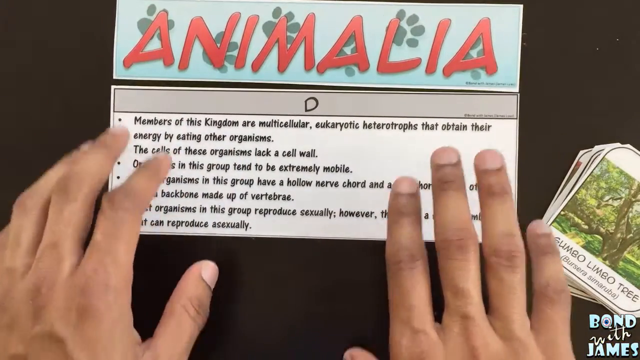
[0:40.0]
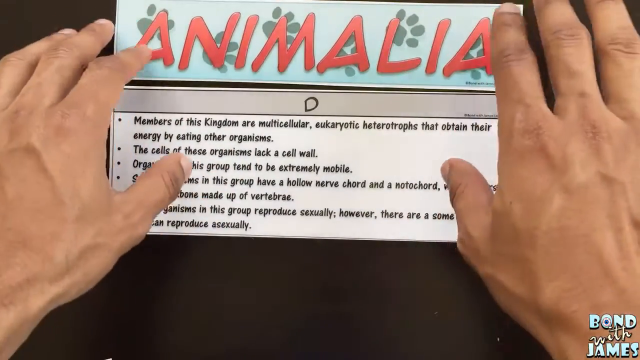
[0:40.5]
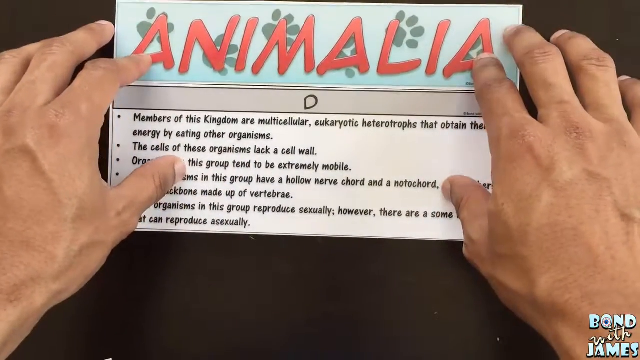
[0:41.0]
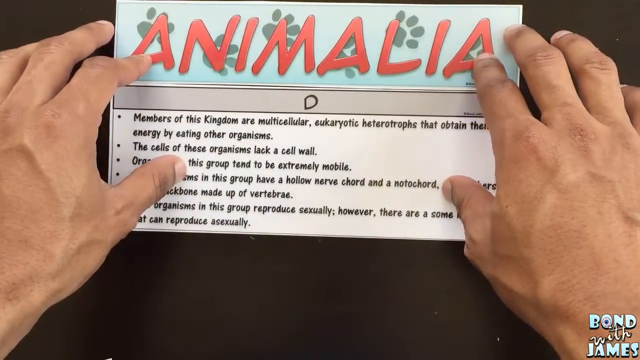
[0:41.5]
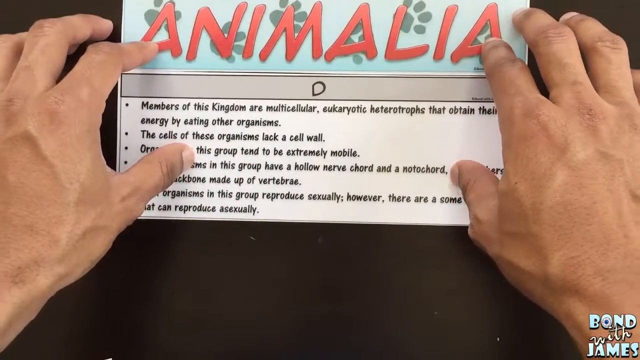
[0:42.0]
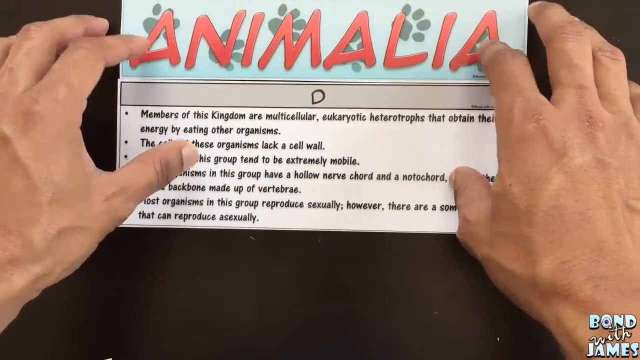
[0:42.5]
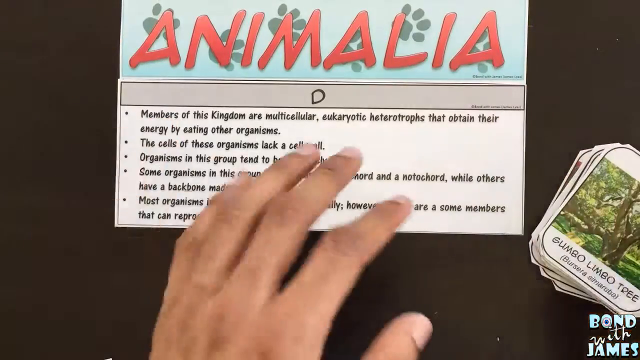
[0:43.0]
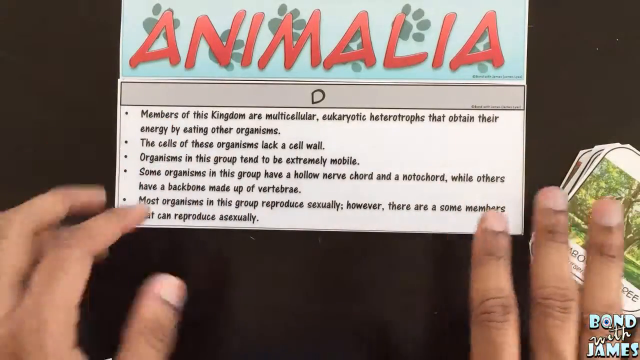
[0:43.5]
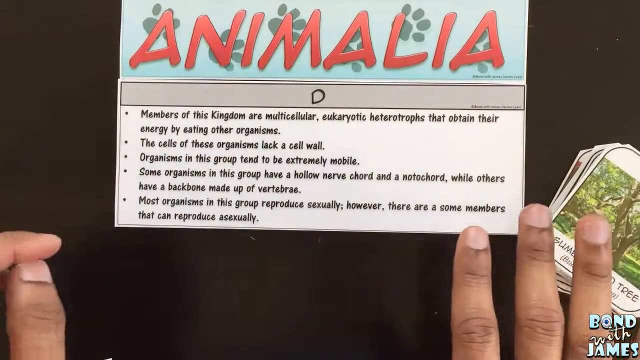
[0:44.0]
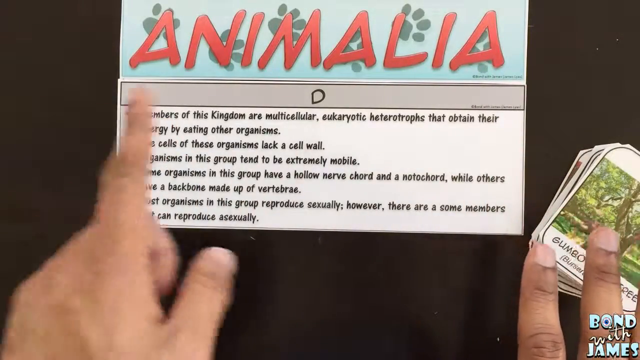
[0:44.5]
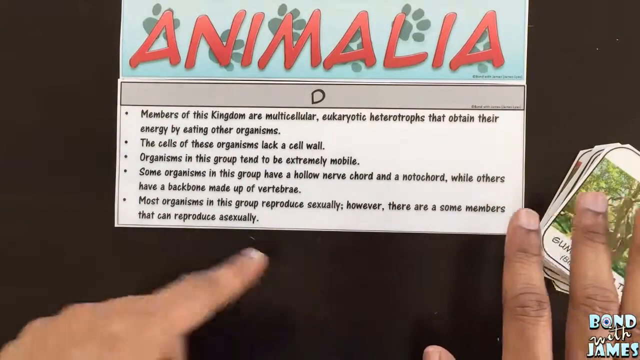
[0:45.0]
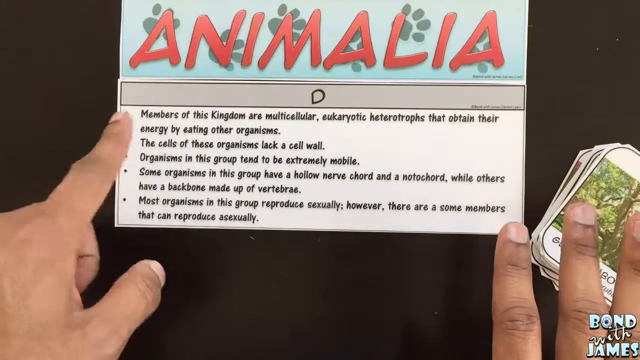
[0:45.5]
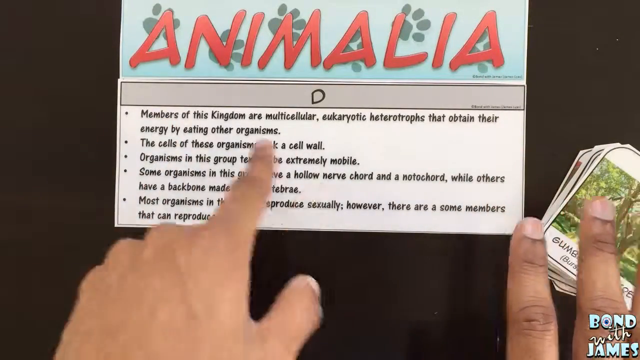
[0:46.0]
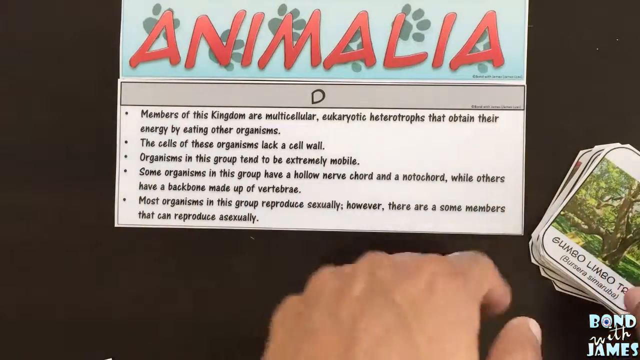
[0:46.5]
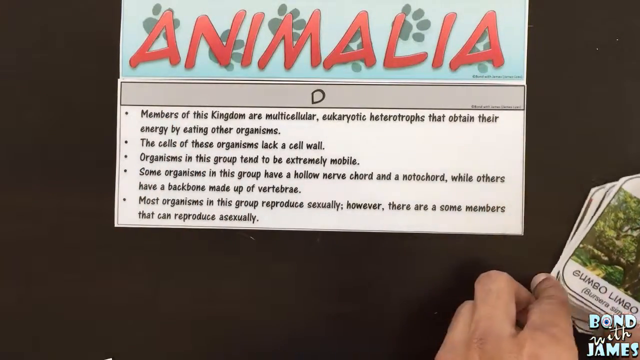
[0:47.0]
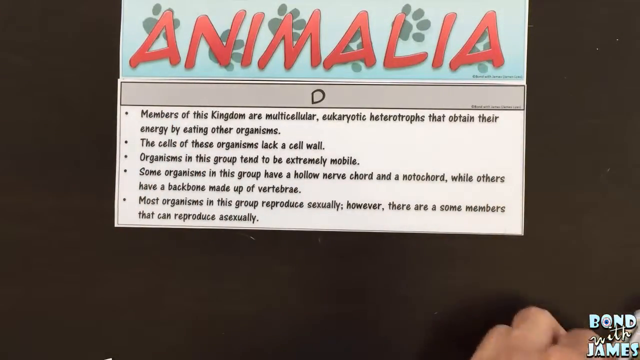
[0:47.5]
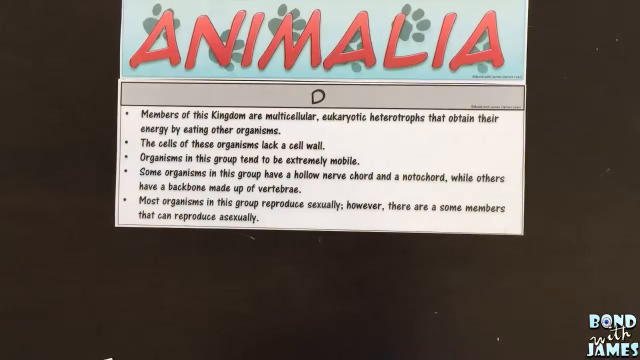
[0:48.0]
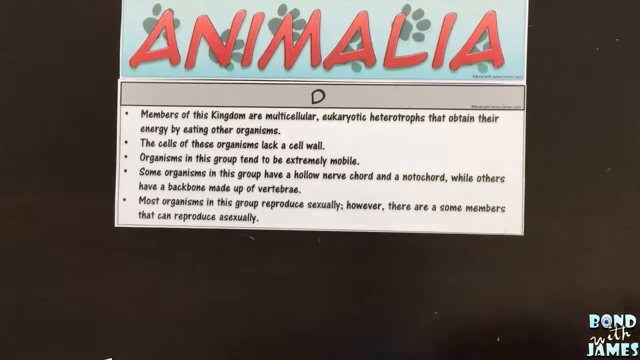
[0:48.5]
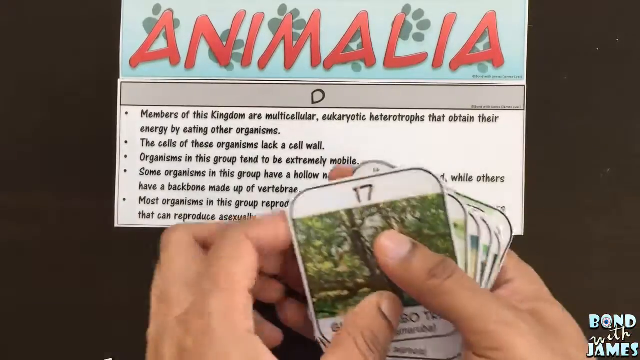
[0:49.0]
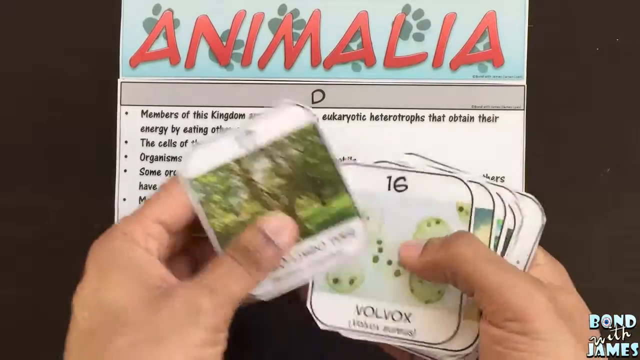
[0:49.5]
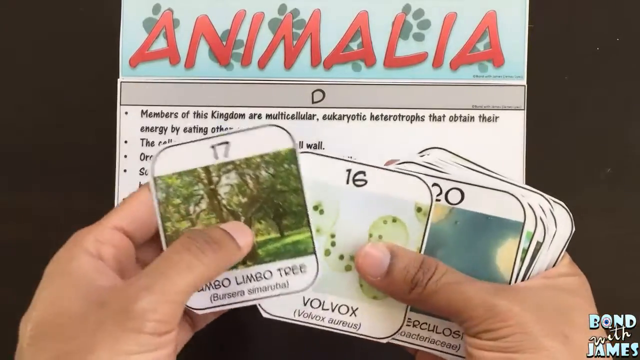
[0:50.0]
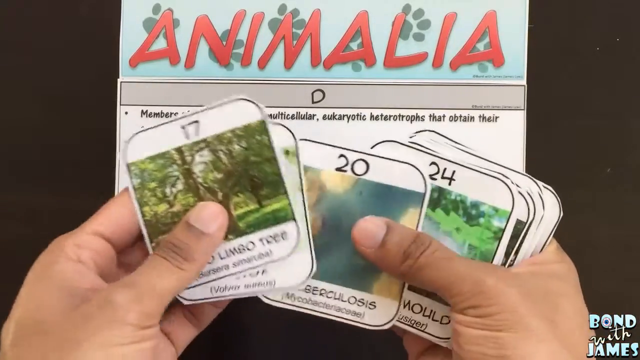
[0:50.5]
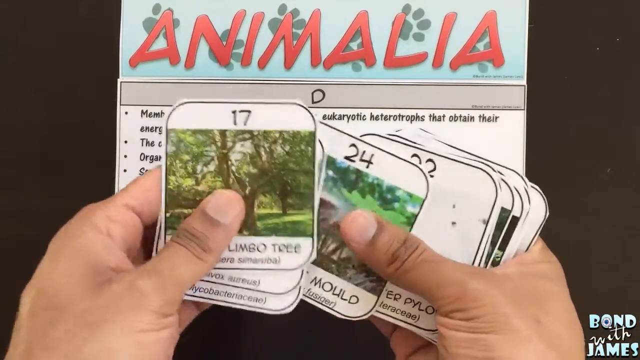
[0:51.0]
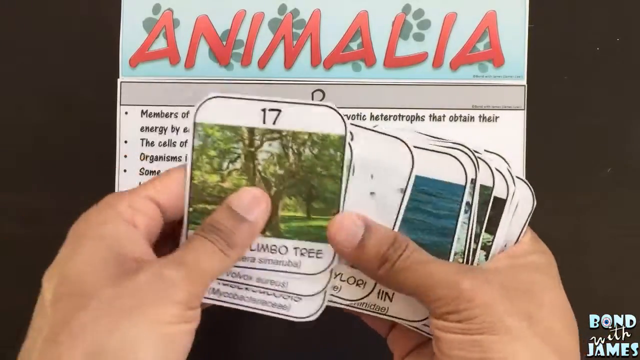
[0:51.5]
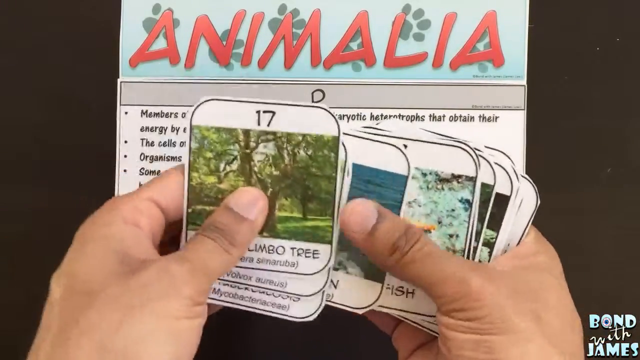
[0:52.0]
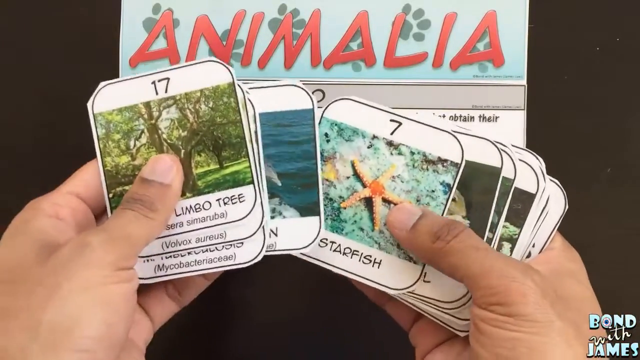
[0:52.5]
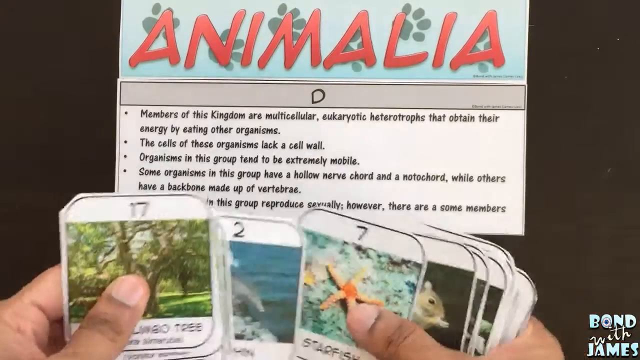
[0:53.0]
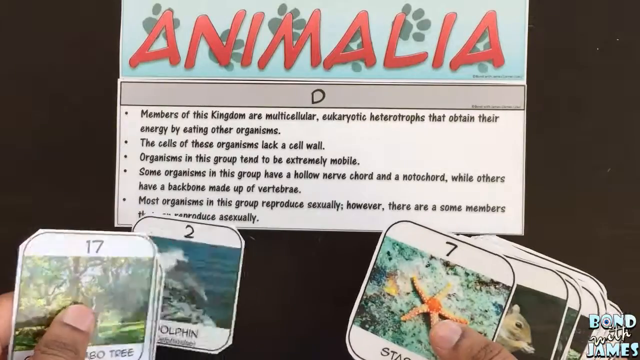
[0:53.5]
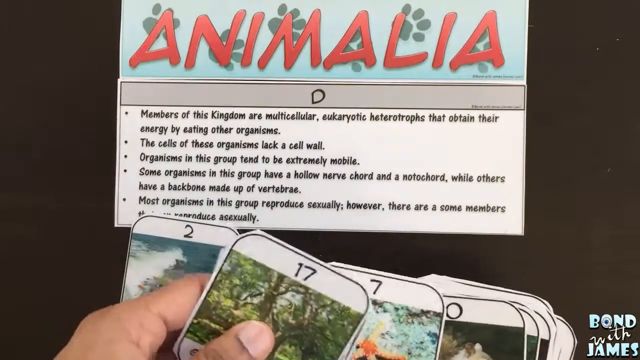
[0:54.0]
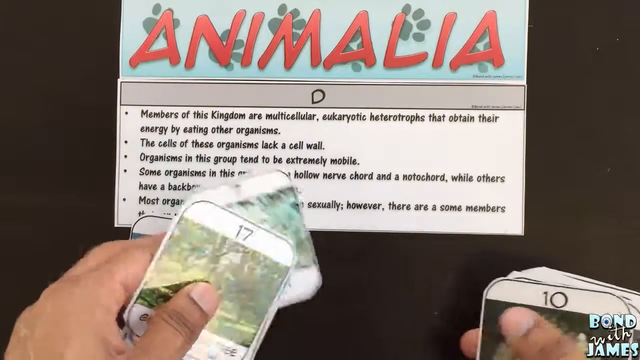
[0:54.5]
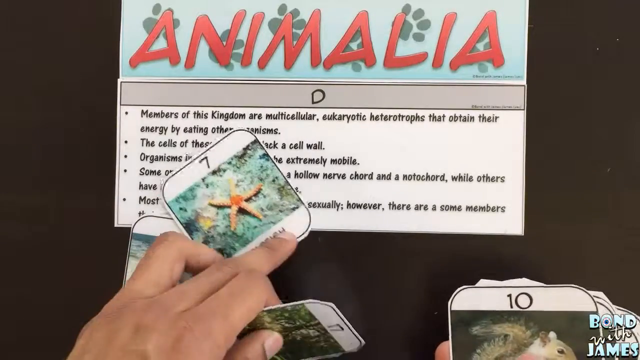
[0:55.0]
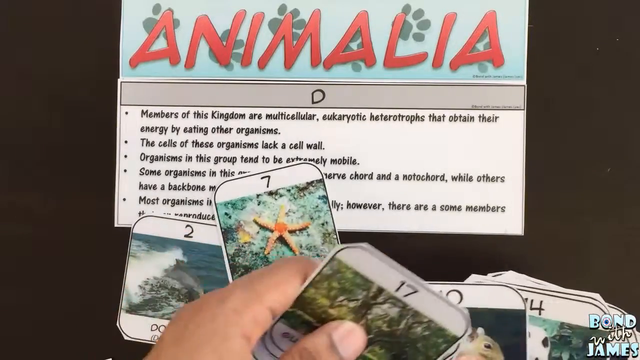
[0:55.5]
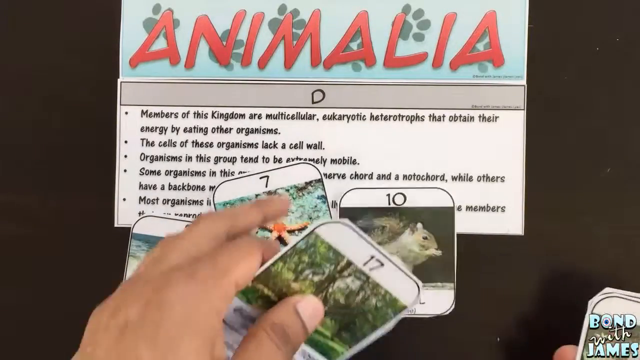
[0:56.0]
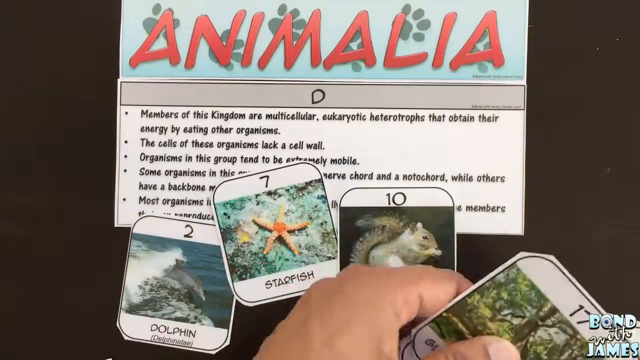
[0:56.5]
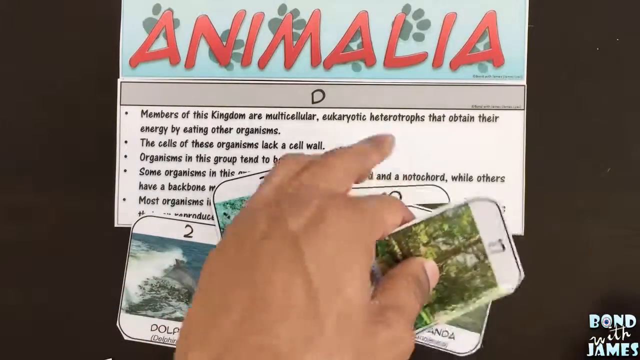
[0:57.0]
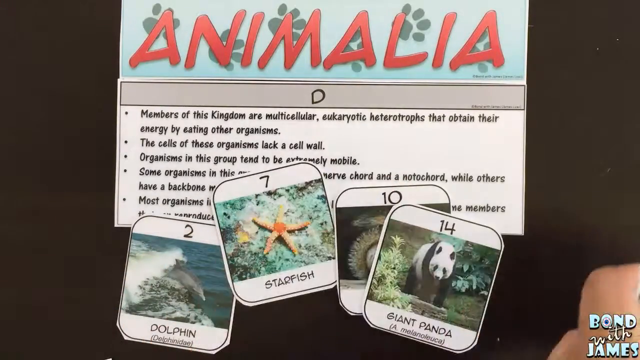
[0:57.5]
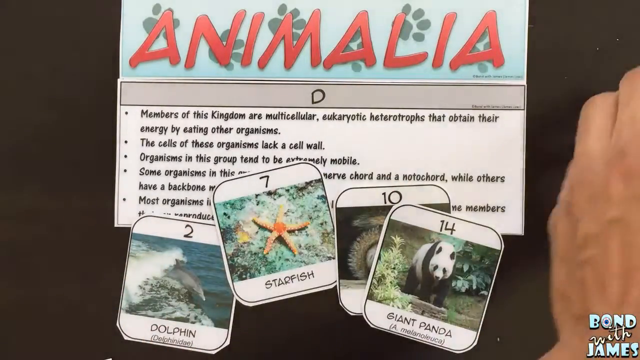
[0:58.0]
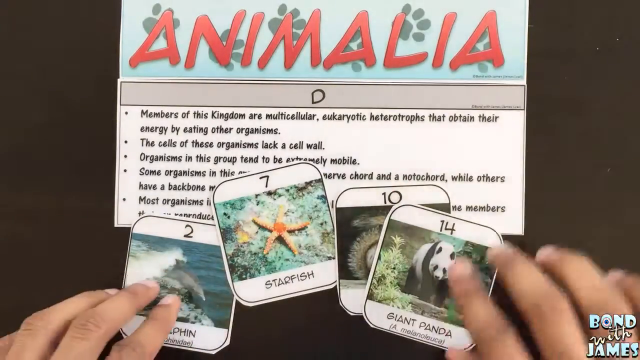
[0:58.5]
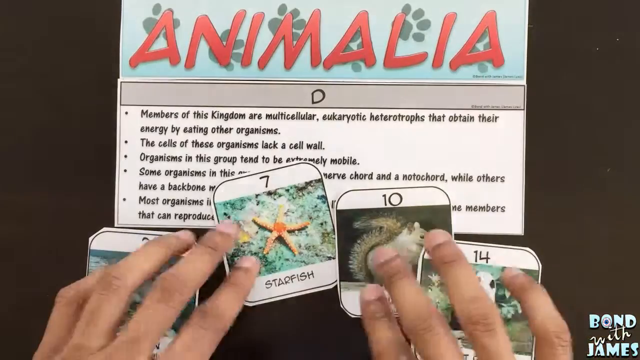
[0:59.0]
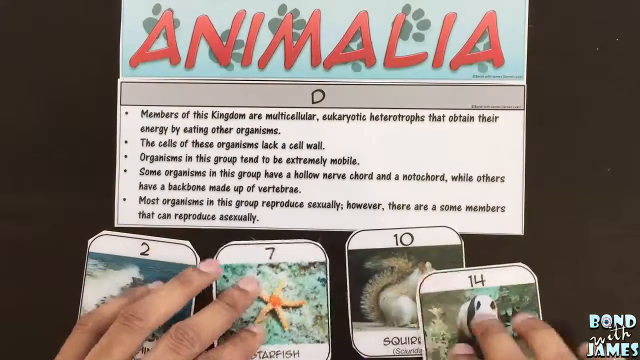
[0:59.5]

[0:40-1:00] A white man holds two papers together on top of a table. The top paper has "animalia" written in red on a blue background with cat footprints on it, and the bottom paper has the letter D and writing on it. The man seems to be explaining, pointing with his index finger at the paper. He then holds small papers that look like posters and takes out four of them, numbered 2, 7, 10 and 14. The black and white paper labeled D reads: "Members of this kingdom are multicellular Eukaryotic heterotrophs that obtain their energy by eating other organisms The cells of these organisms lack a cell wall Organisms in this group tend to be extremely mobile Some organisms in this group have a hollow nerve cord and a notochord while others have a backbone made up of a vertebrae Most organisms in this group reproduce sexually". It also says "There are some members that can reproduce asexually".